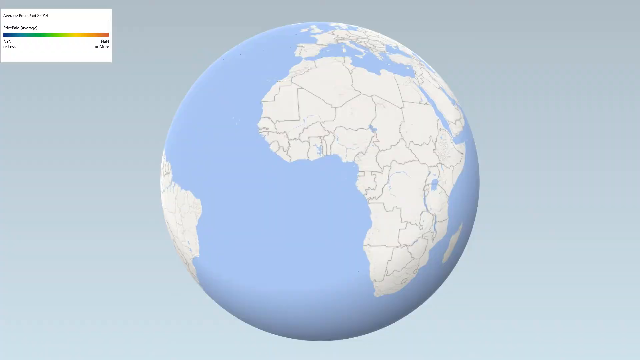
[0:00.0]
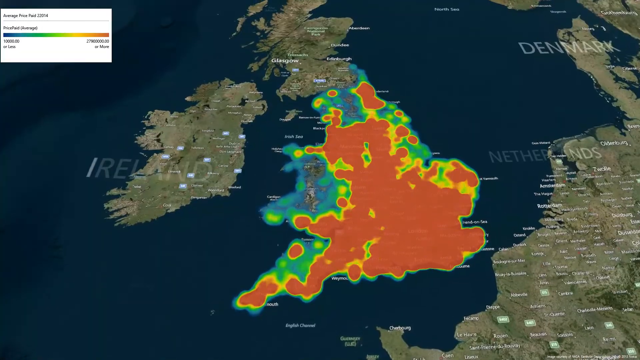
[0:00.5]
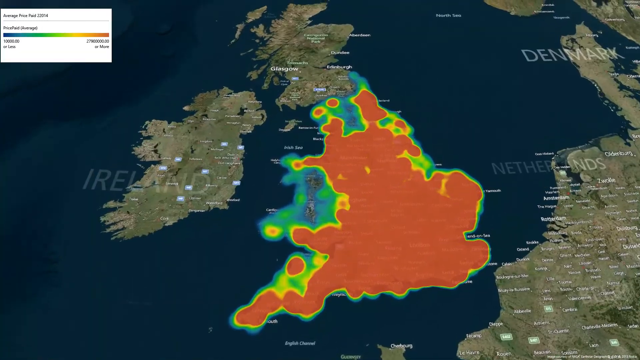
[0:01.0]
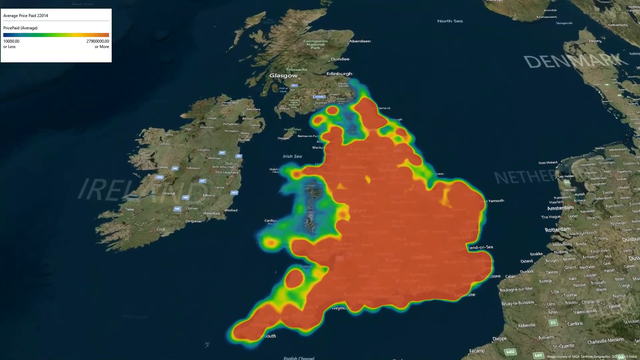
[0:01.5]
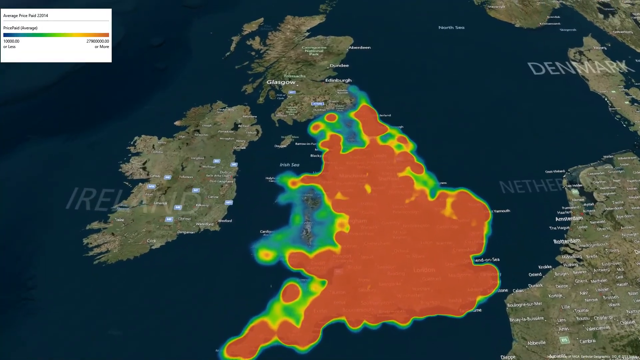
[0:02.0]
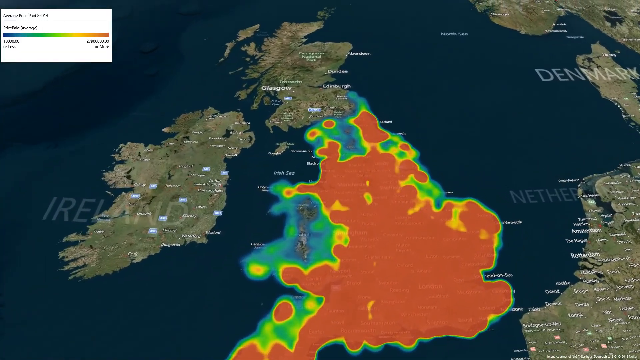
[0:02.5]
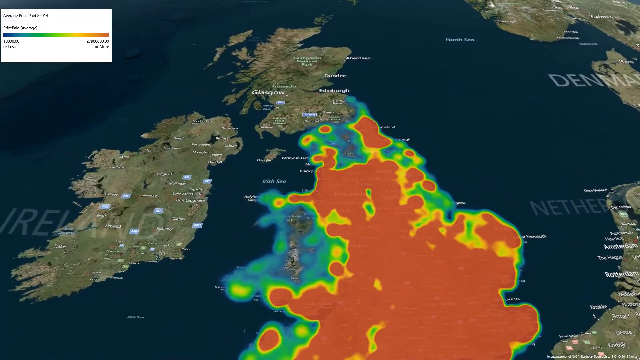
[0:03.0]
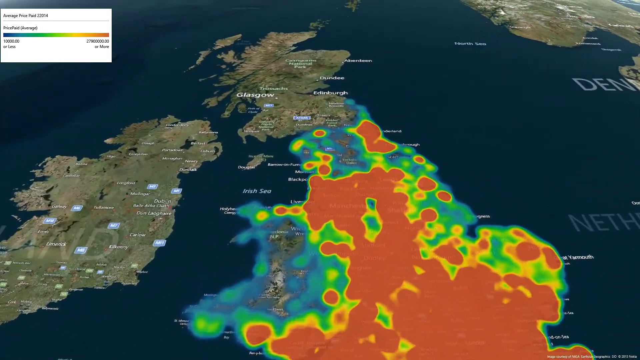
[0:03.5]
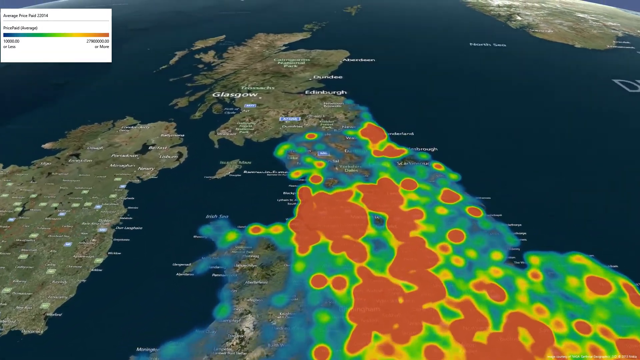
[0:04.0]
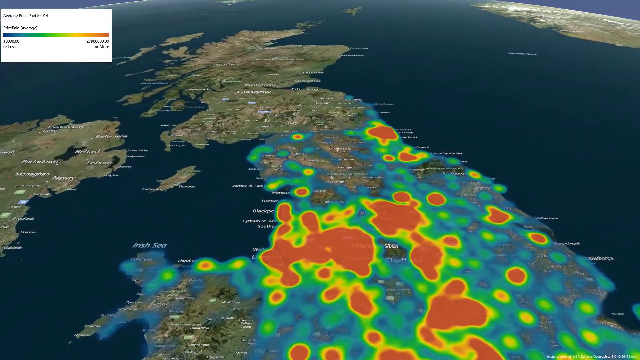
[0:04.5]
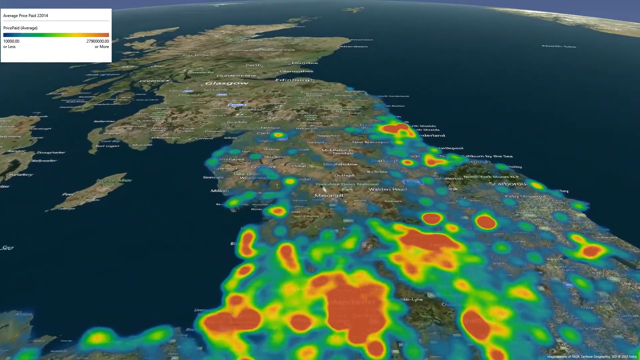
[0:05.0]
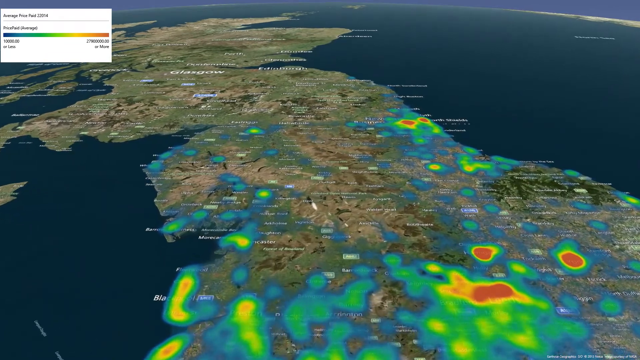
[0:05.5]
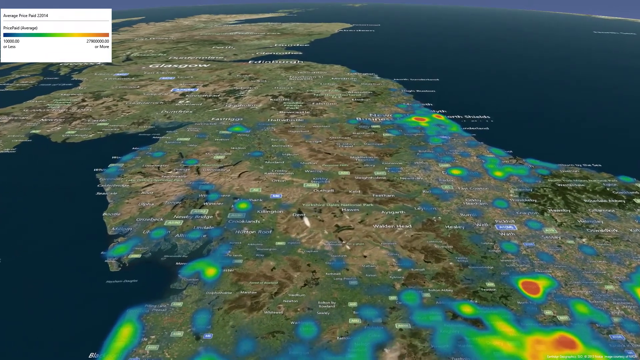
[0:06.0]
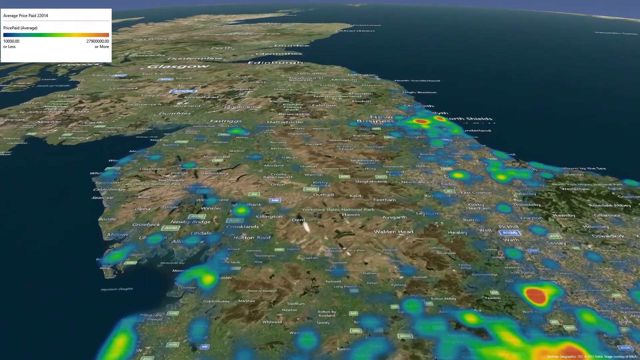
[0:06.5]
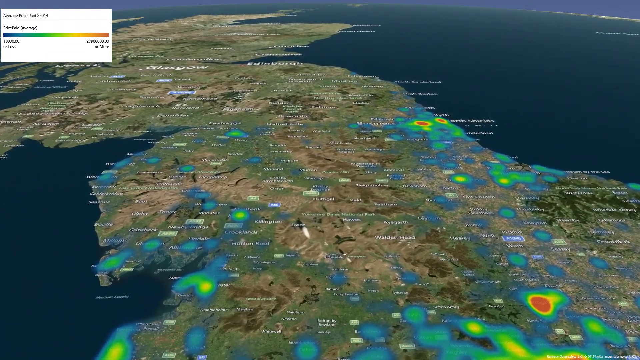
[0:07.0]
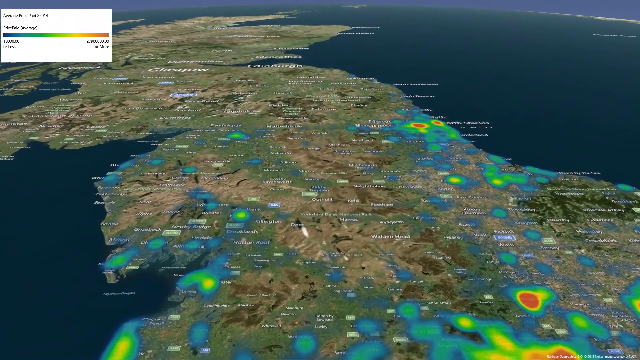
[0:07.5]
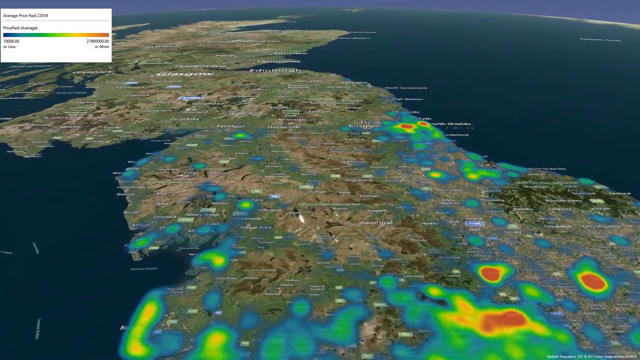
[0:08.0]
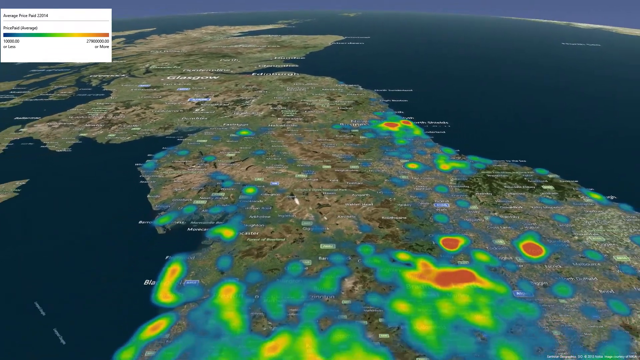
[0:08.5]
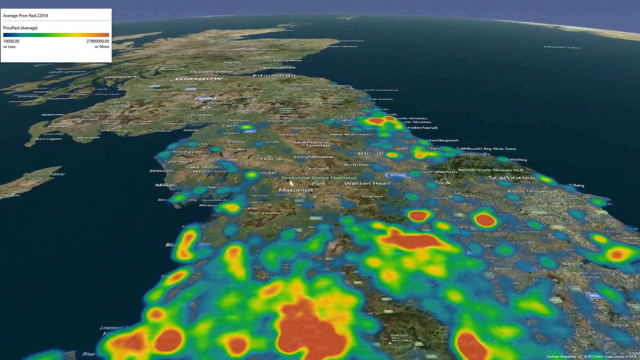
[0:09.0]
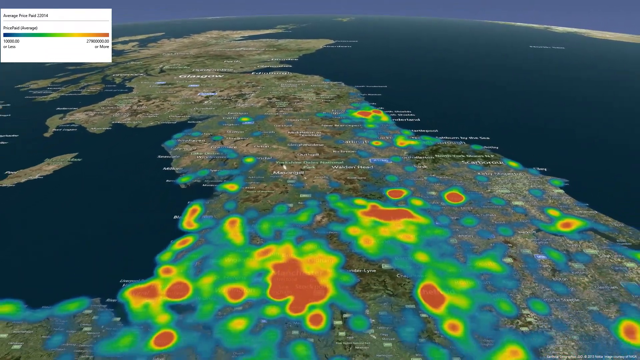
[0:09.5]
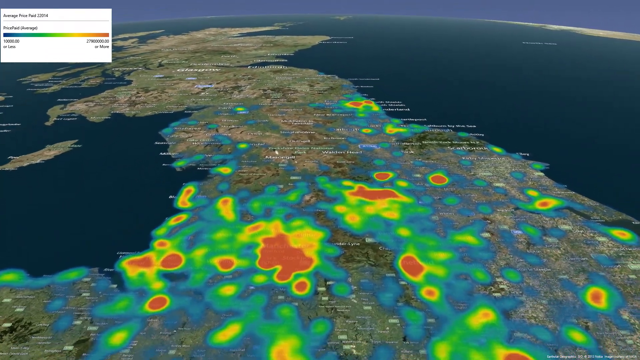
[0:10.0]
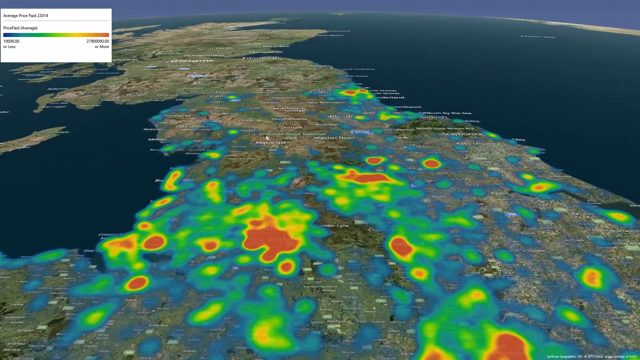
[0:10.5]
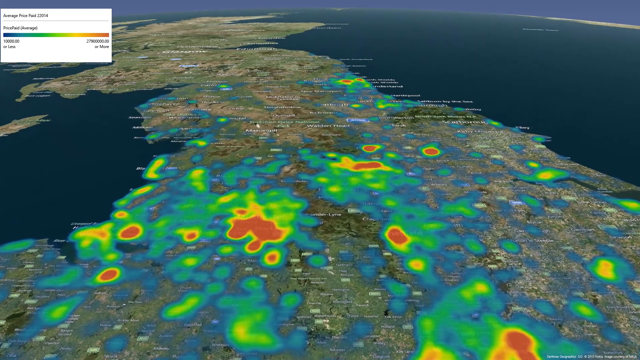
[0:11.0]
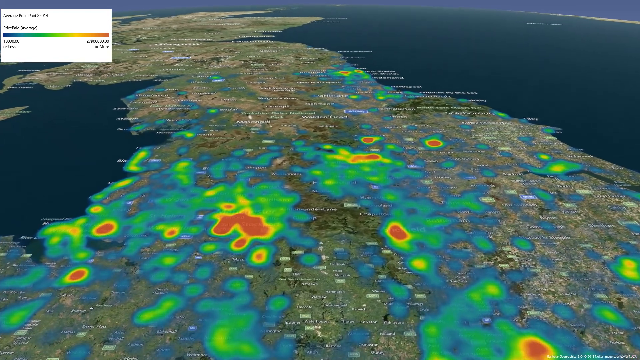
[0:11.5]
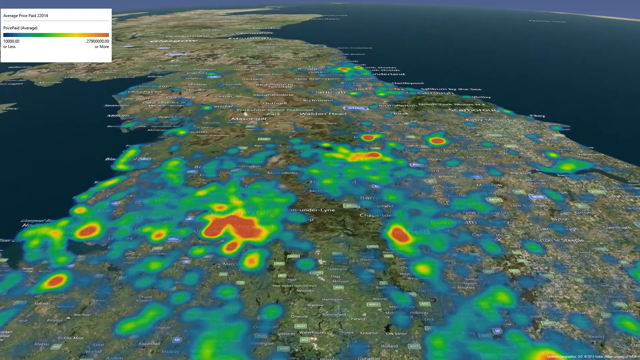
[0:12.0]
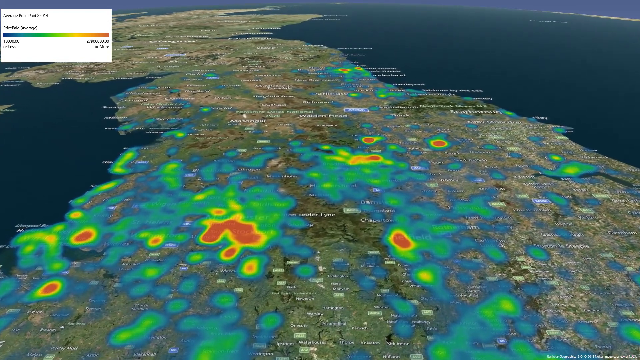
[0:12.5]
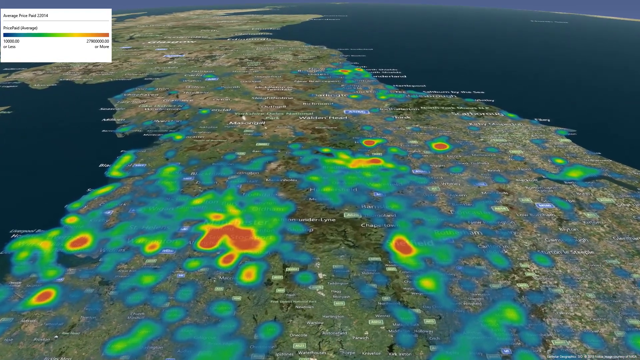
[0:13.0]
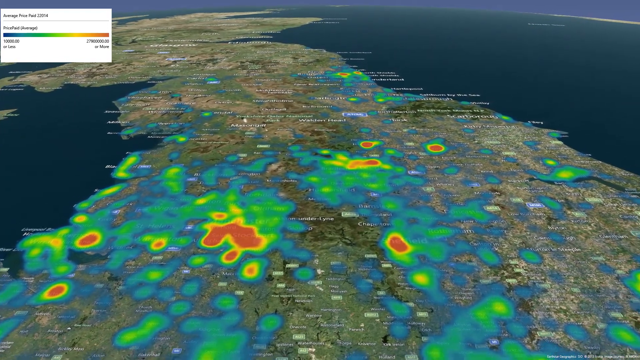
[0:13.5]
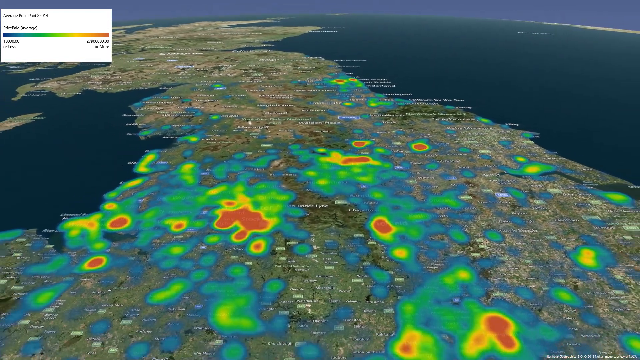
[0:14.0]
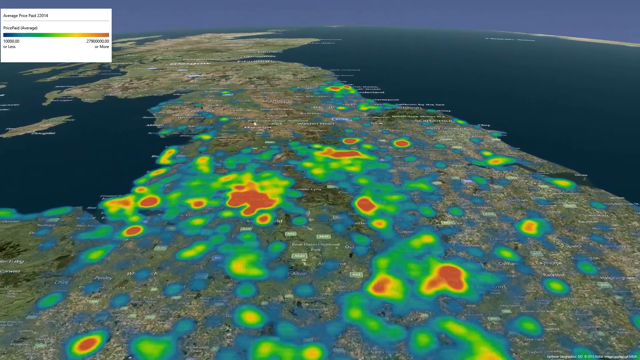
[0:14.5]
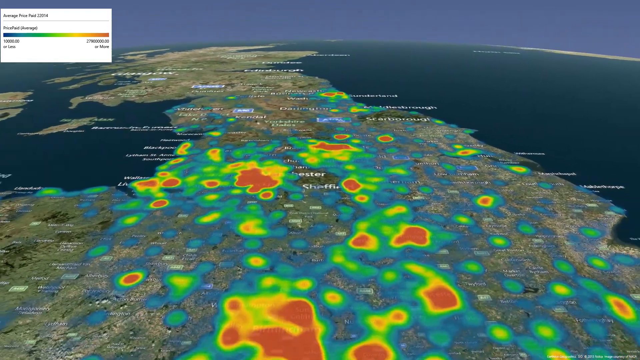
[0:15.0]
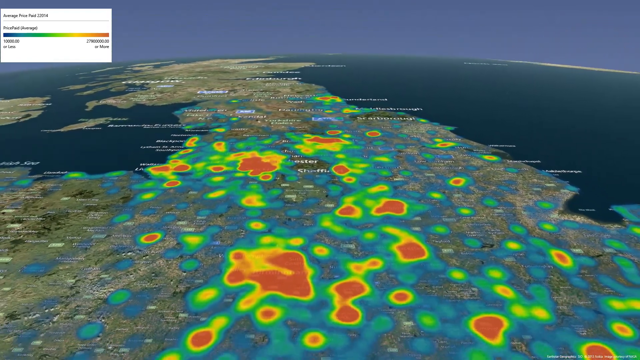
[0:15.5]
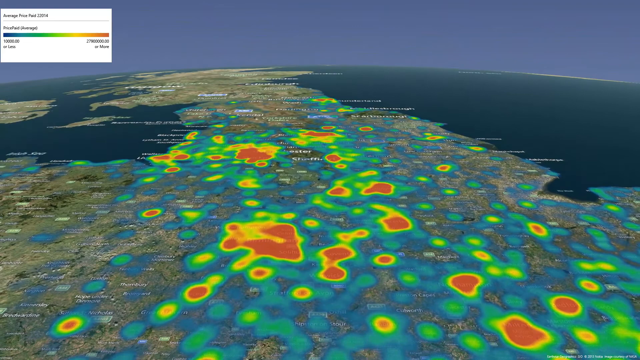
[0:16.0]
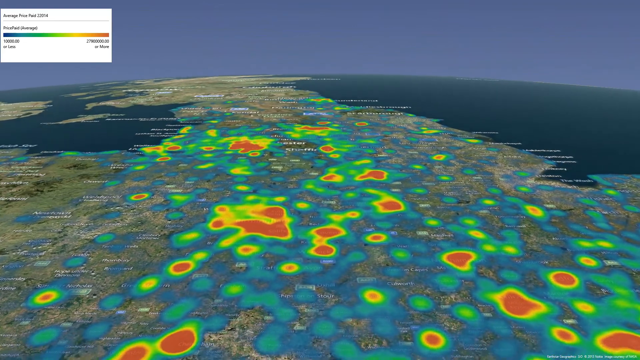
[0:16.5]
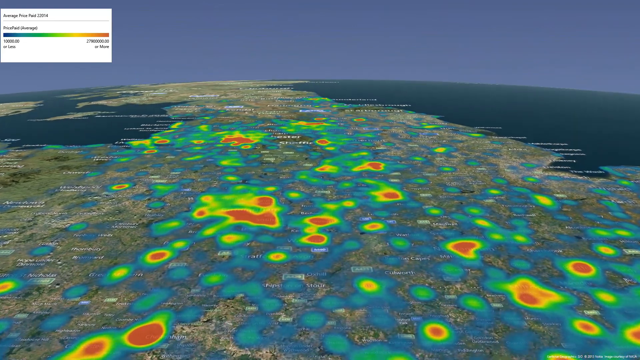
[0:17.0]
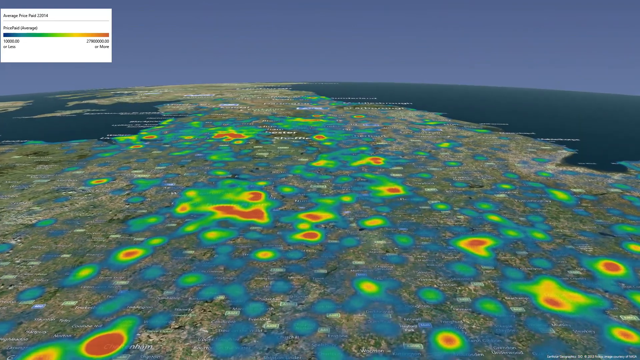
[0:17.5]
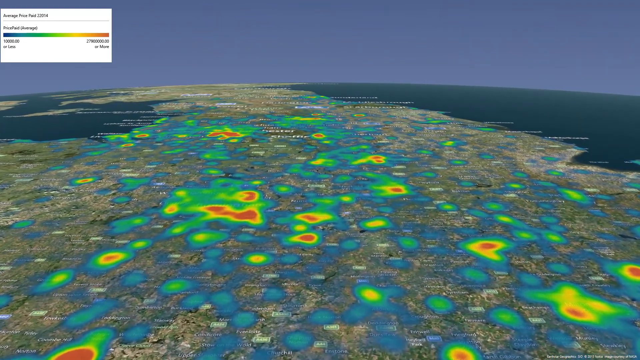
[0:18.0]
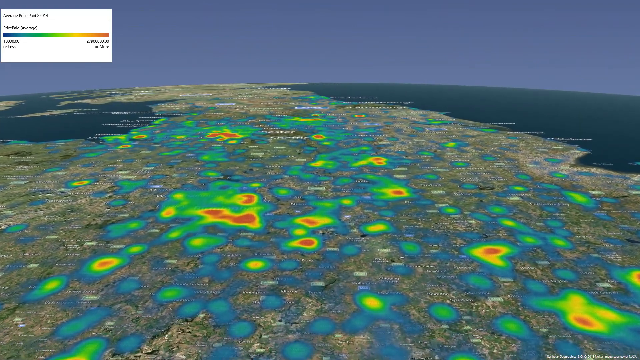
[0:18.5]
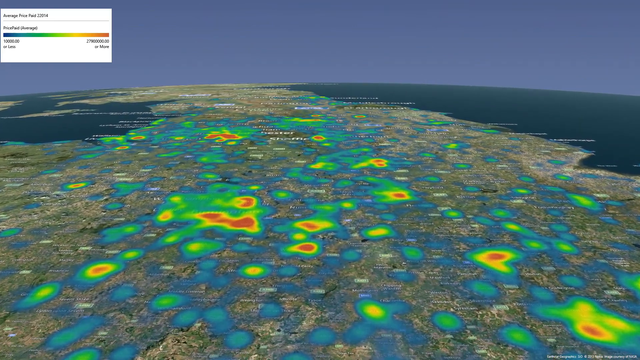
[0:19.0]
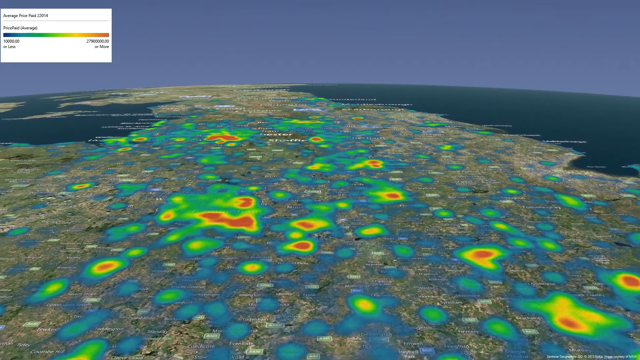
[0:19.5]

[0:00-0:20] The video opens on a graphic image of the globe, a drawn or computer-generated image rather than live footage. In the top corner is a small box with text and a bar graph that reads "AVERAGE PRICE PAID"; the rest of the text, and what it measures, cannot be made out. The view moves to a closer look at a map of Europe. Ireland is labeled on the left, the Netherlands on the right, and Denmark is labeled above the Netherlands. At the center is what appears to be England, with Scotland above it, though the cities of Scotland are labeled rather than the landmass itself. The land is colored according to the graph, with colors ranging from blues to greens, flowing into yellow and finally red. The visible portion of England is primarily red, with green and yellow around the edges. The map continues to zoom in and up and over, and as it zooms in the colors break up: it is not completely red but shows shades of blue and green, a bit of yellow, and smaller central pockets of red. The primary color is blue.